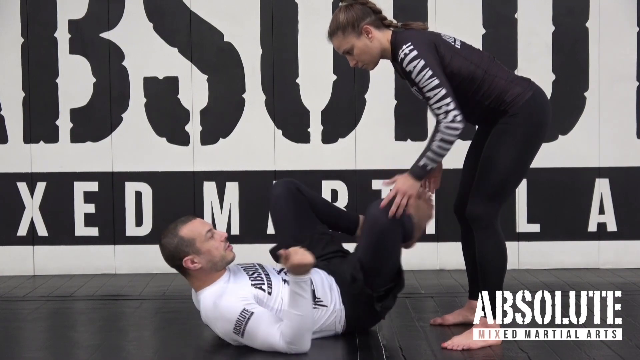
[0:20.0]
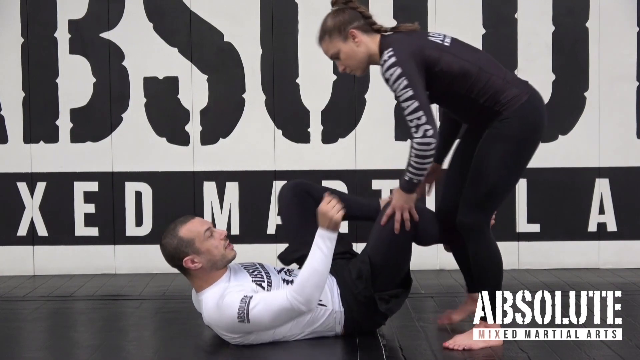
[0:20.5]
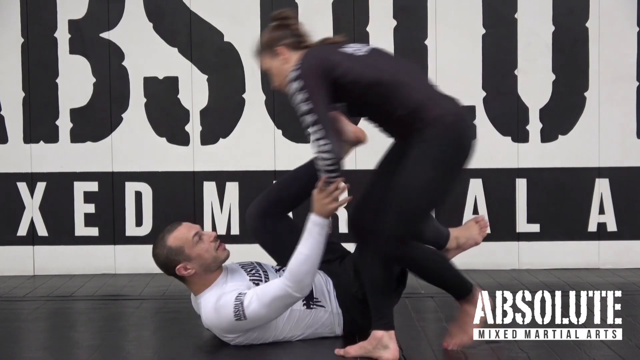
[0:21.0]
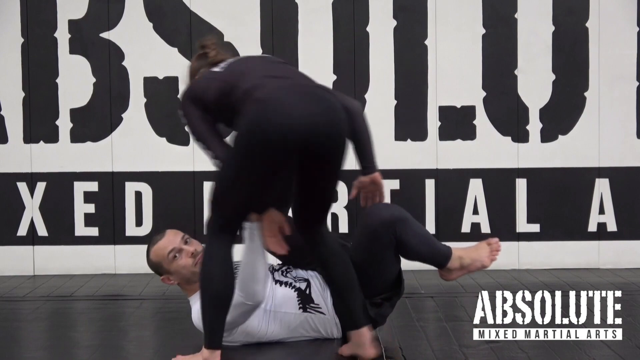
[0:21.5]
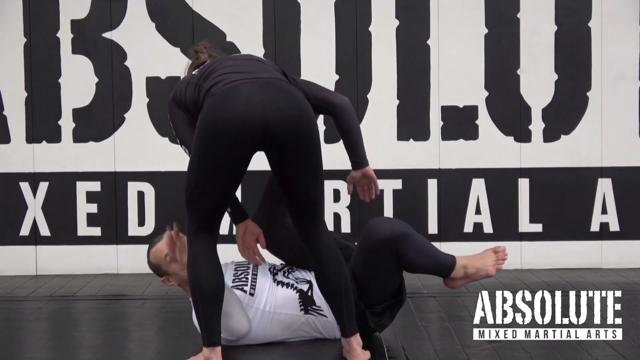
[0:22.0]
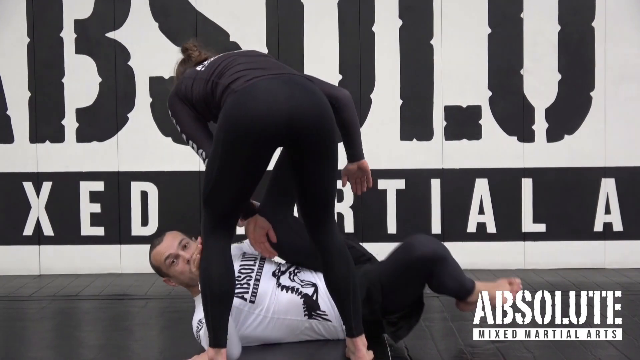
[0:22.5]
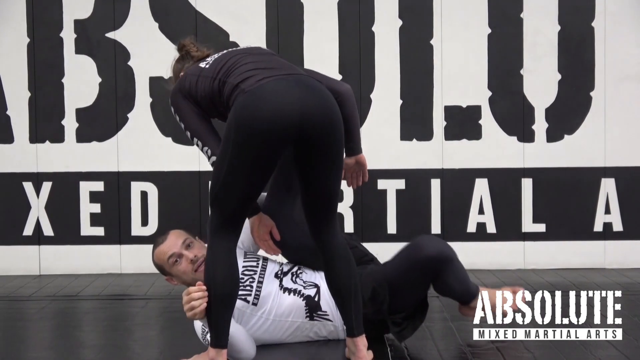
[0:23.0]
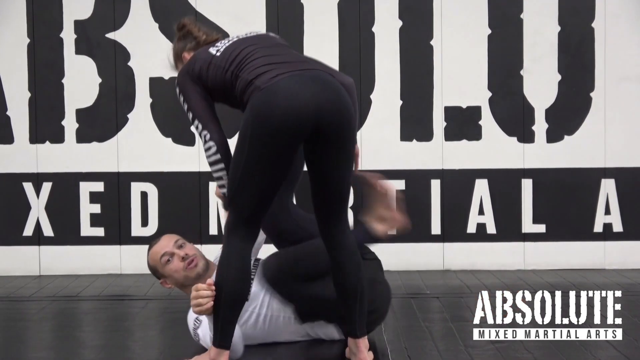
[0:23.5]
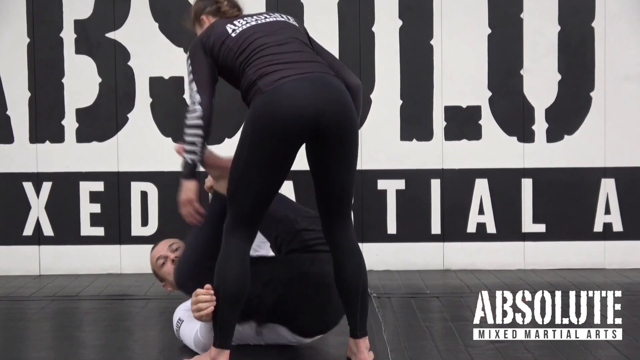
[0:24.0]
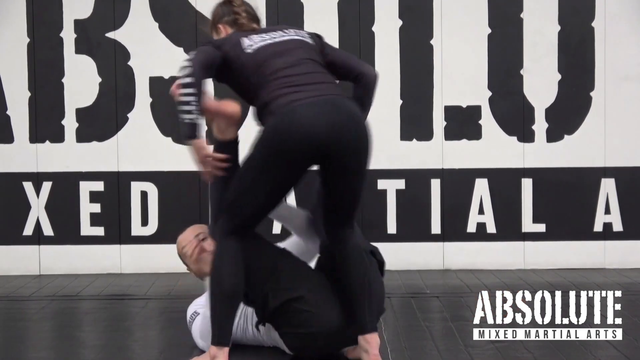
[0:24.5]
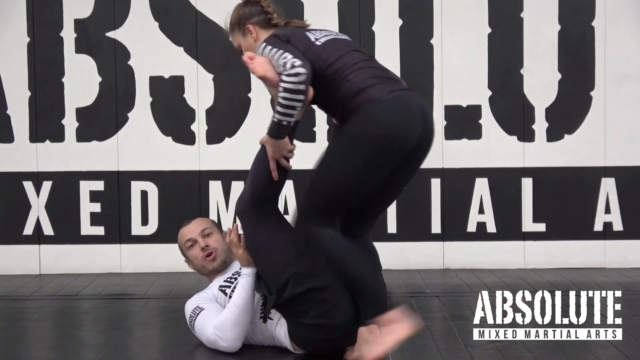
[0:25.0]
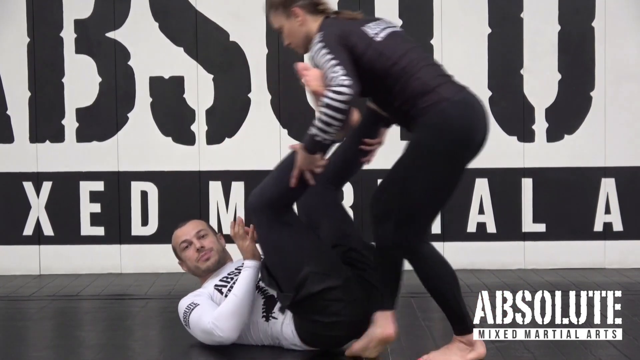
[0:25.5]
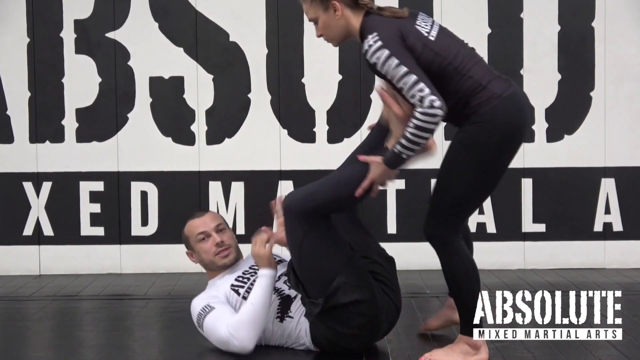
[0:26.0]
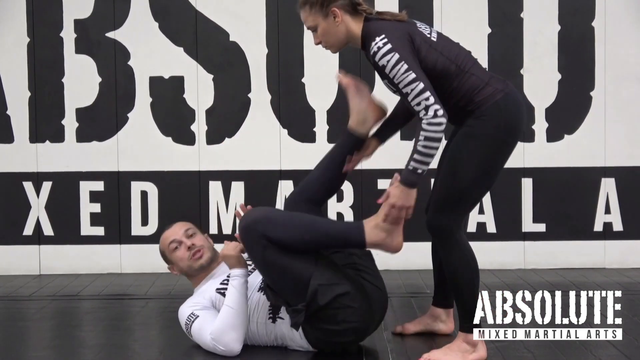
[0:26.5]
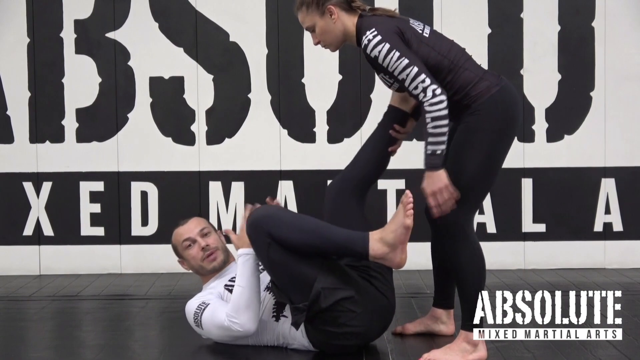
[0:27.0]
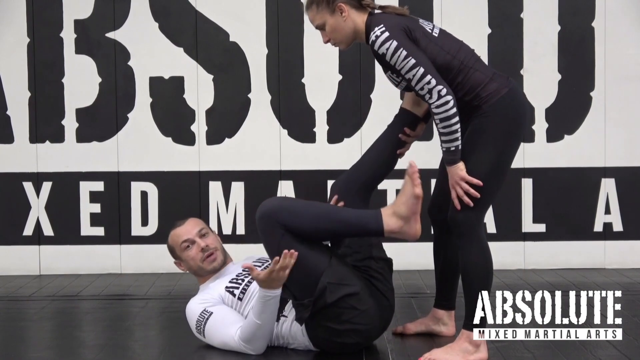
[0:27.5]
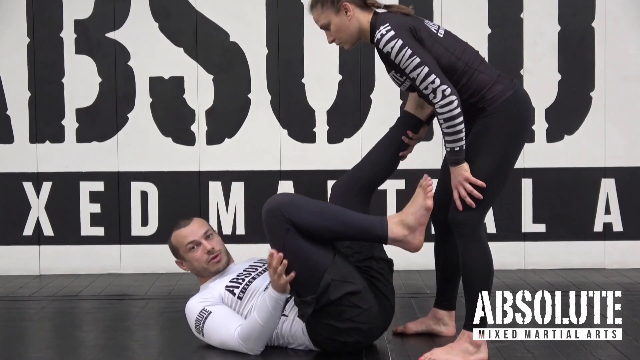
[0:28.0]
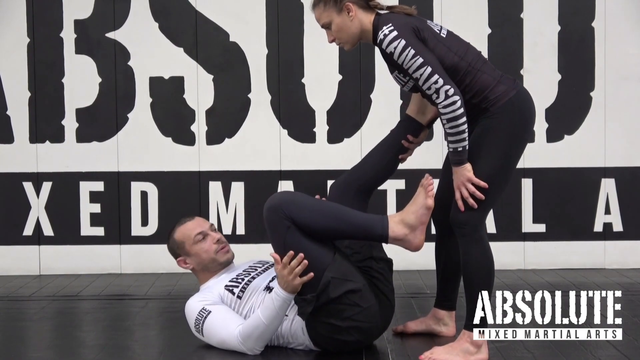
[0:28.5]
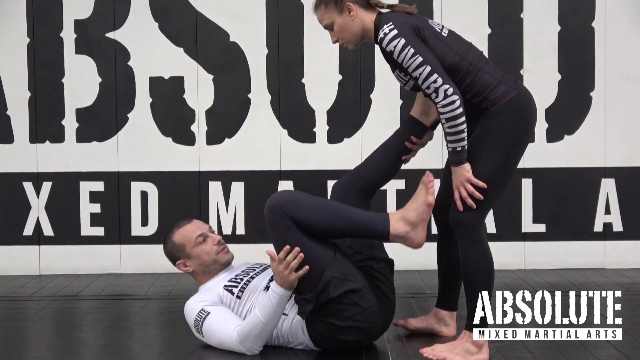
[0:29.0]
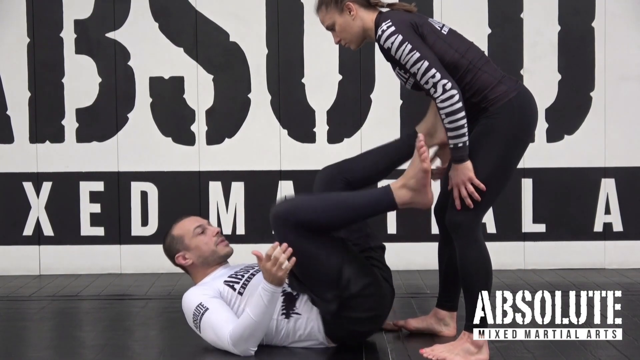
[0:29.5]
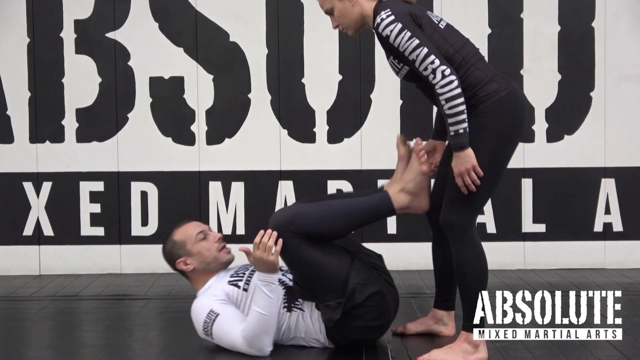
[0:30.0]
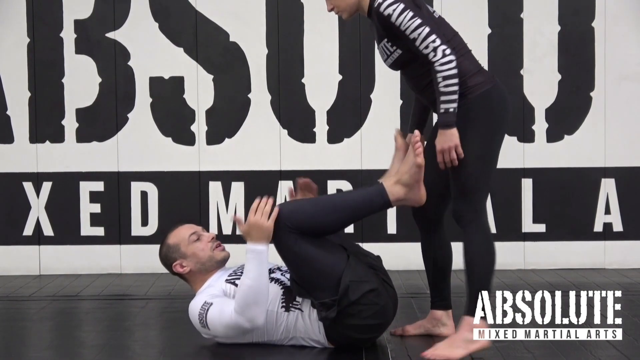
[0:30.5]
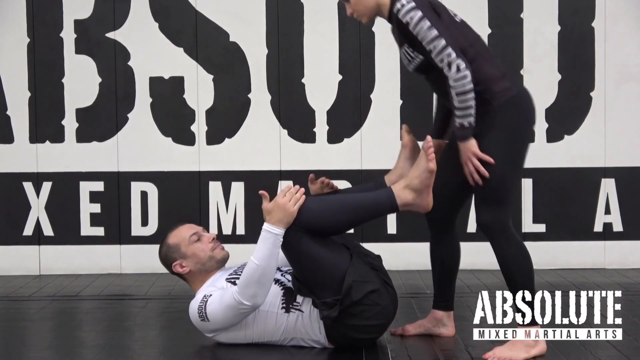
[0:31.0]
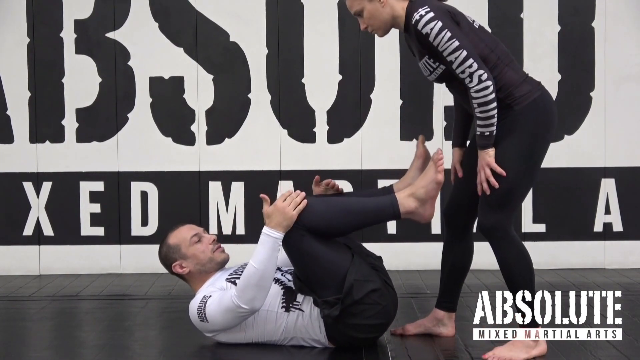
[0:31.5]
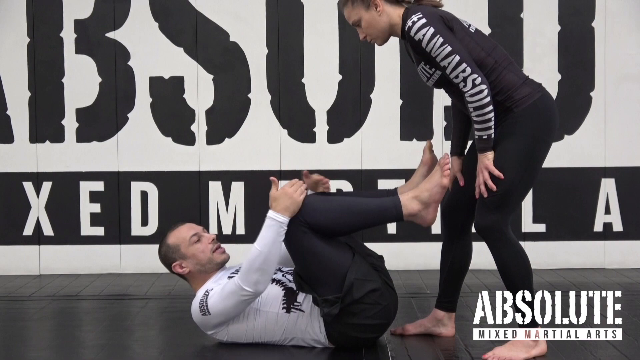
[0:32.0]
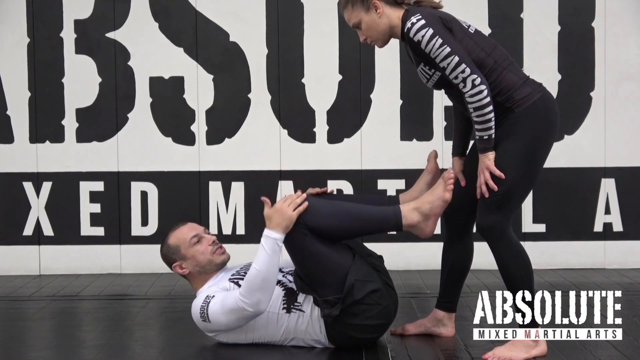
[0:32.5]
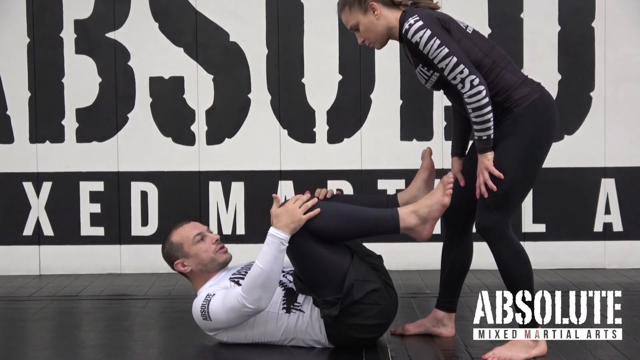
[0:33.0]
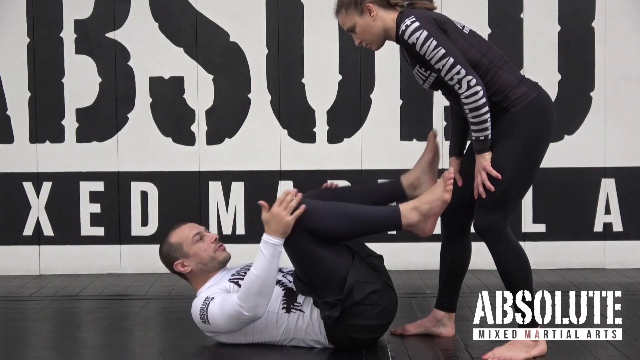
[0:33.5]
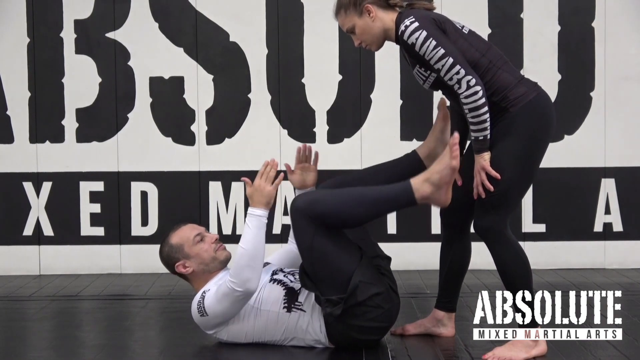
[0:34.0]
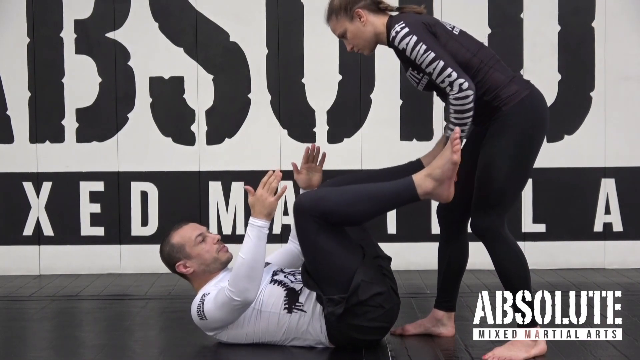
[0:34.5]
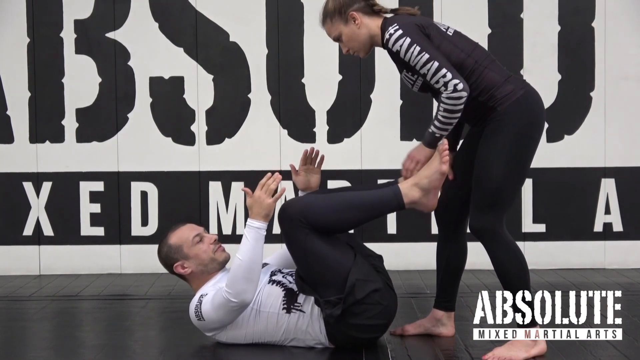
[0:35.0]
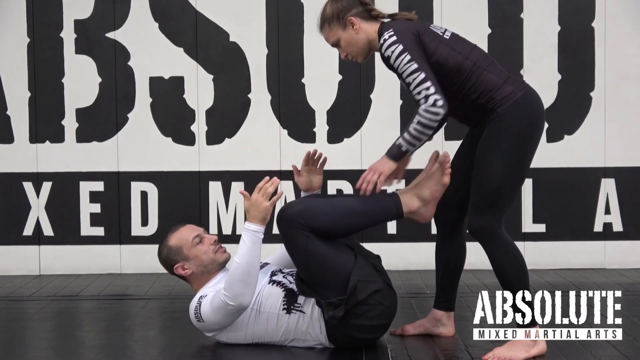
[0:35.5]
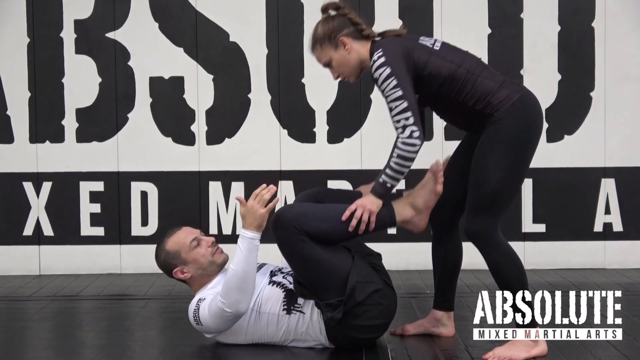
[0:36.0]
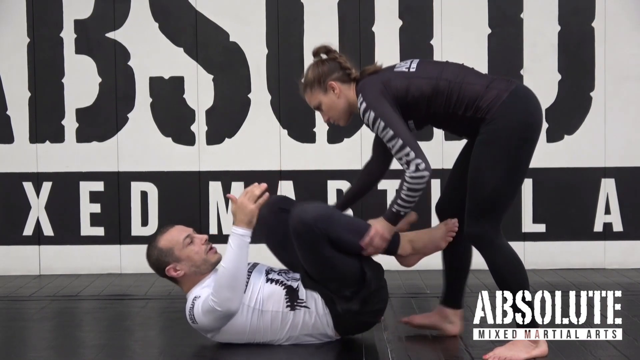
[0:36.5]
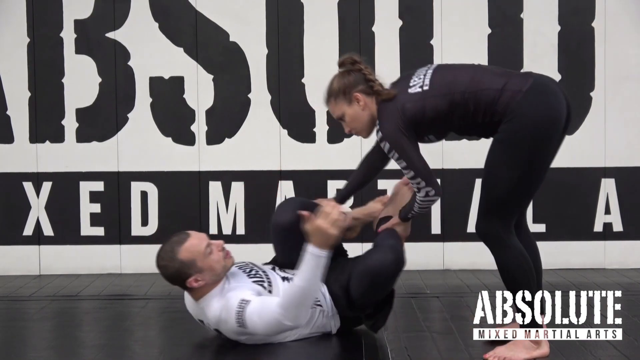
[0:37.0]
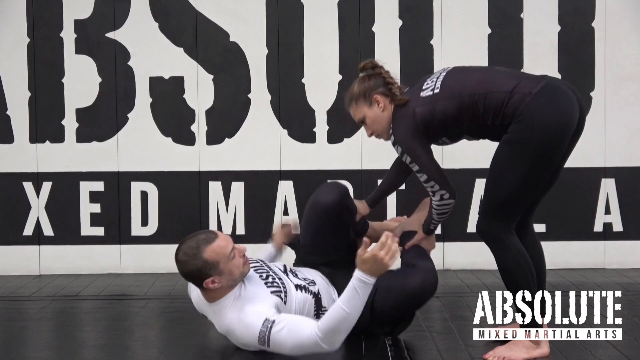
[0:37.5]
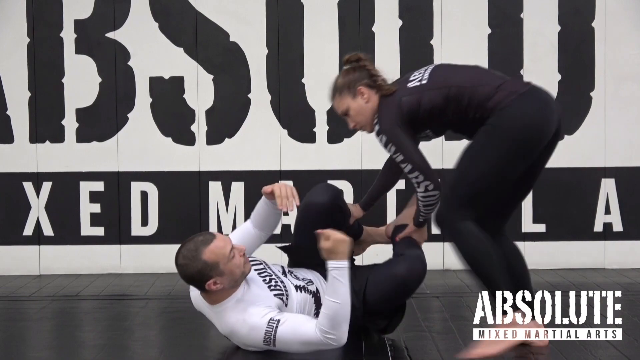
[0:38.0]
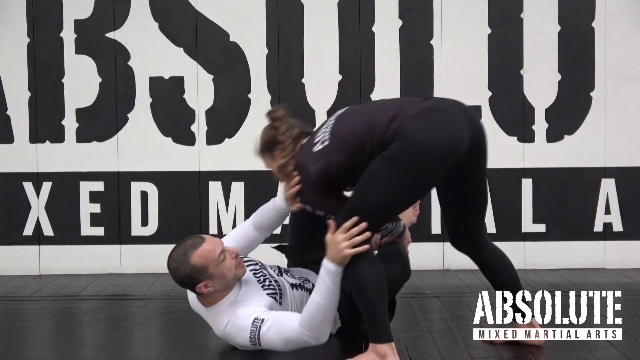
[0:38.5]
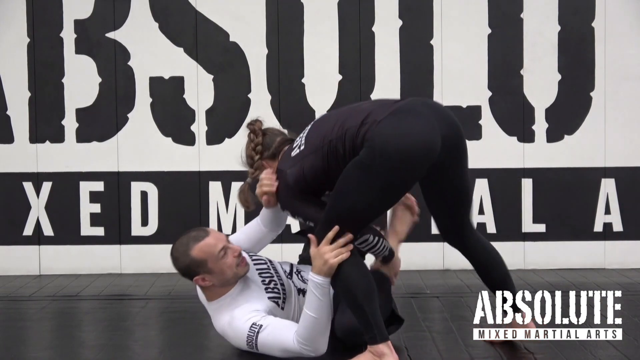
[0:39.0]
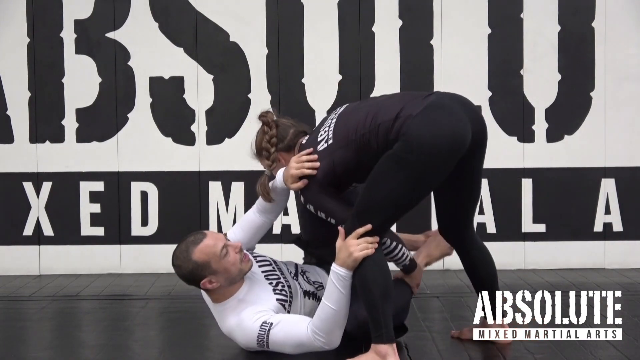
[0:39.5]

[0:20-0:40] A man lies on his back wearing a very tight white spandex top and very tight black spandex pants; he has a muscular build and very short hair. Standing over him is a woman in an all-black spandex outfit with white writing on the sleeves. They are in a Brazilian Jiu Jitsu gym on a black mat, with a white wall with black block print writing behind them. The woman moves over the man's chest and stands over it. He explains to the camera the different movements he is making and repositions his legs, placing them near her hips. She then moves back and stands over his knees as he lies on his back with his feet facing up vertically. He gives instructions as he moves, talking with his hands about the different positions he takes. The woman puts her hands just below his knees on his shins, positioning her head over his knees. He then rotates his hips, shifting his feet towards the wall, and the woman's hands move with his shins. She comes down on him as he guides her down with his hands, placing one hand on her shoulder and one hand on her knee.